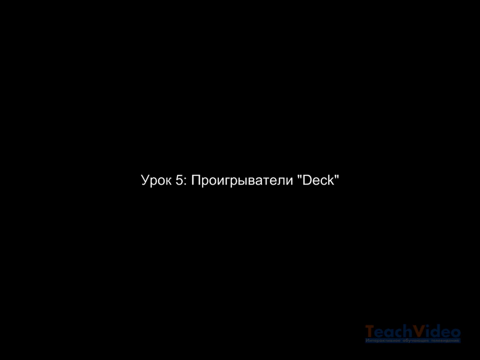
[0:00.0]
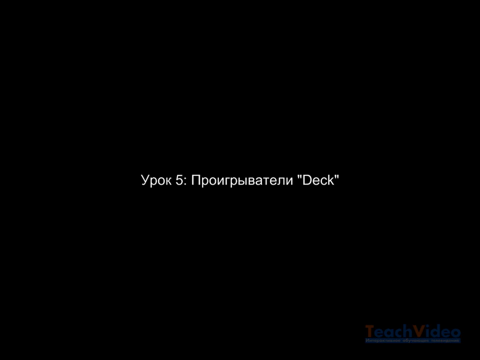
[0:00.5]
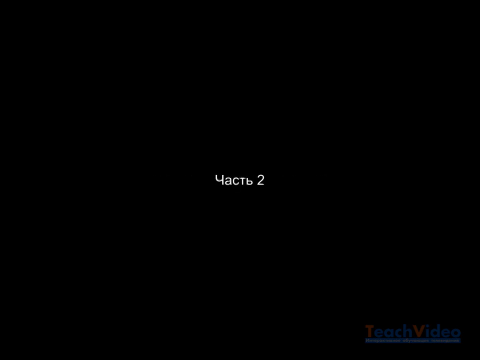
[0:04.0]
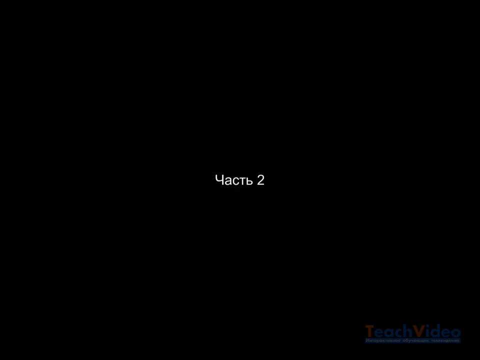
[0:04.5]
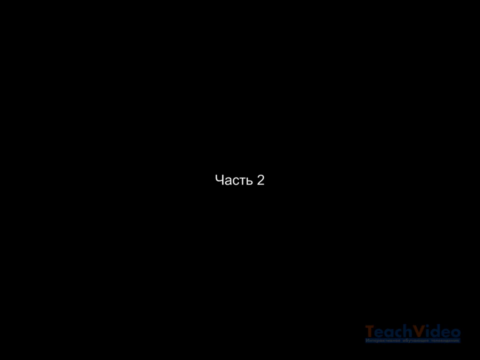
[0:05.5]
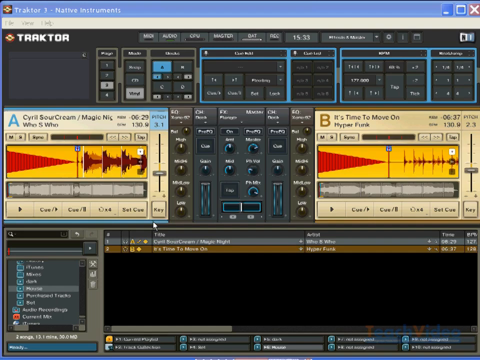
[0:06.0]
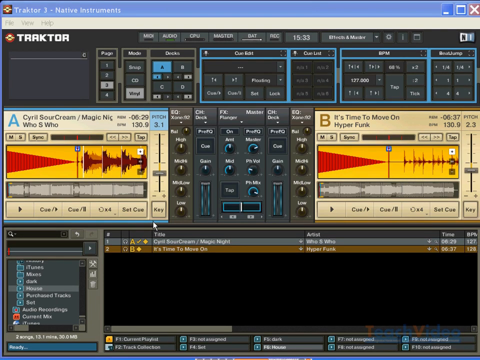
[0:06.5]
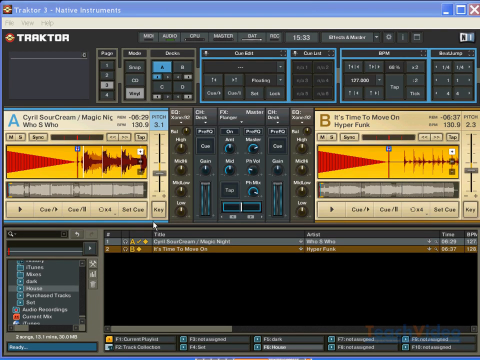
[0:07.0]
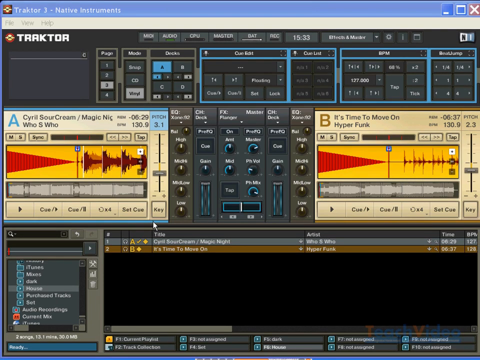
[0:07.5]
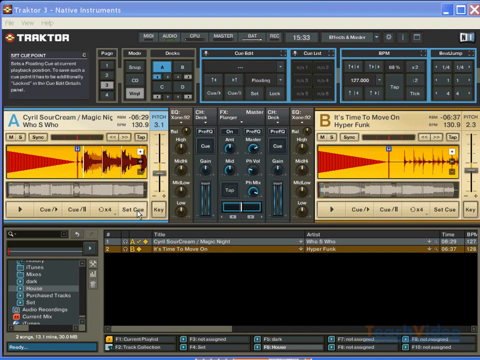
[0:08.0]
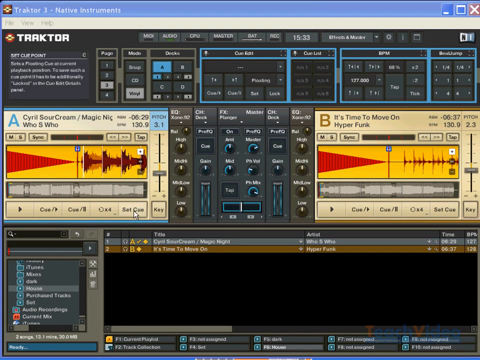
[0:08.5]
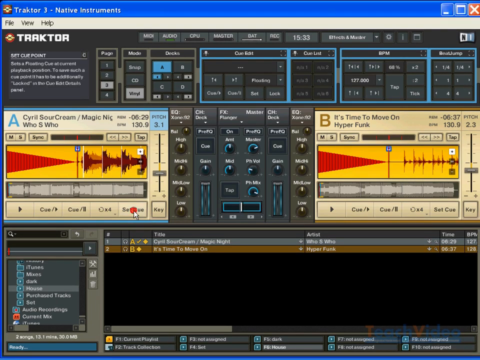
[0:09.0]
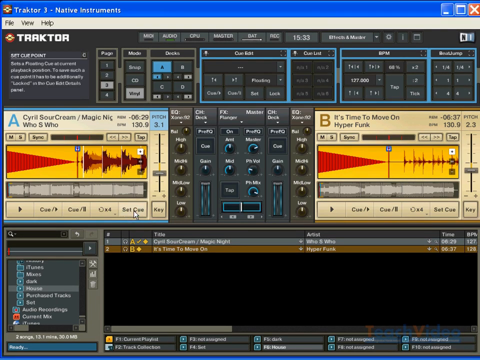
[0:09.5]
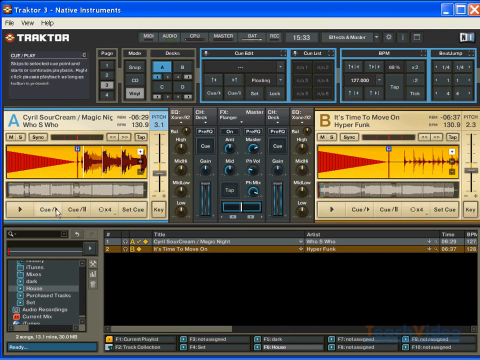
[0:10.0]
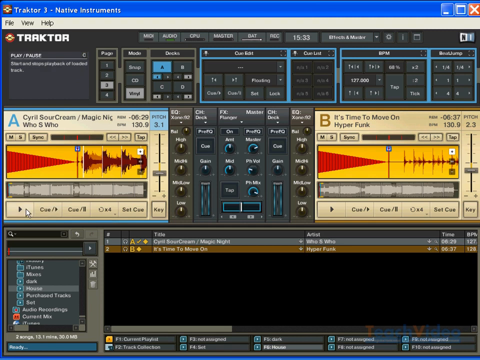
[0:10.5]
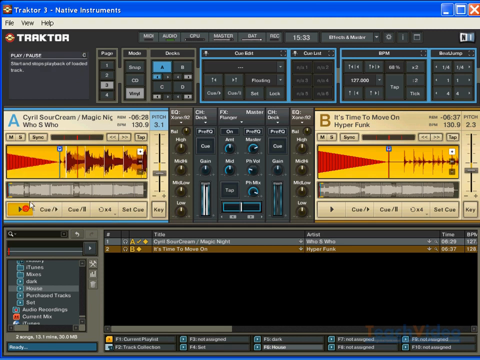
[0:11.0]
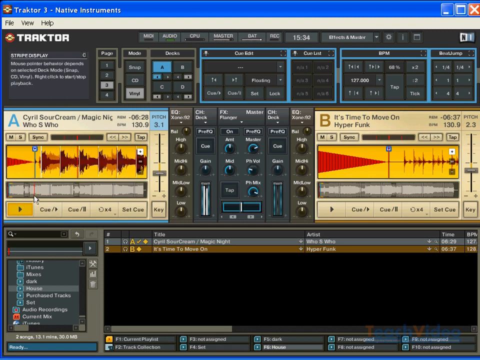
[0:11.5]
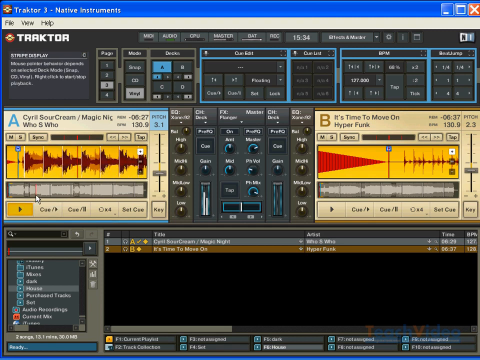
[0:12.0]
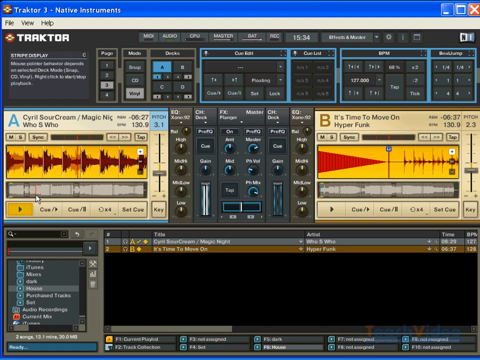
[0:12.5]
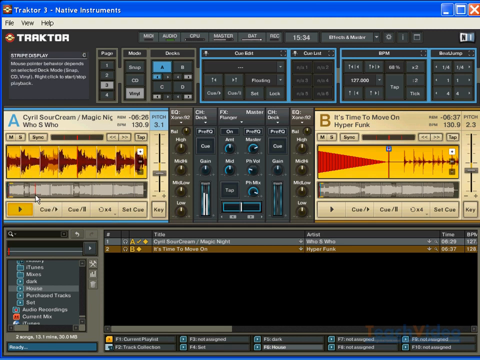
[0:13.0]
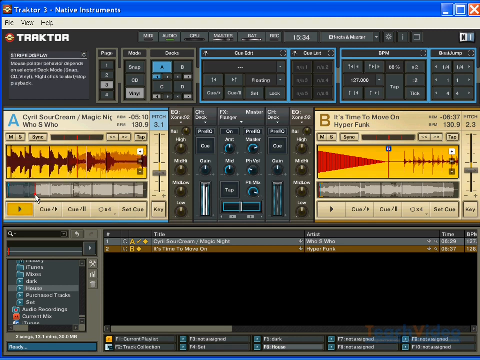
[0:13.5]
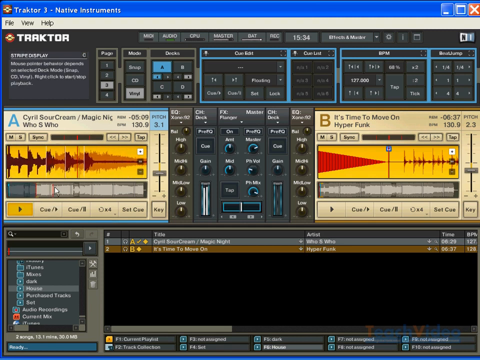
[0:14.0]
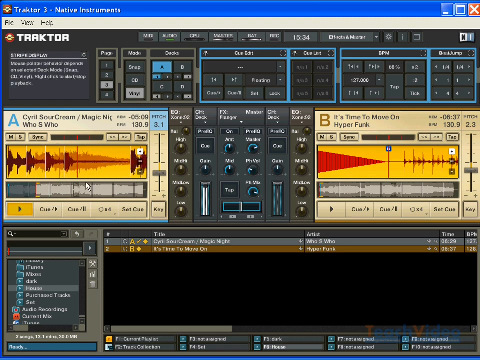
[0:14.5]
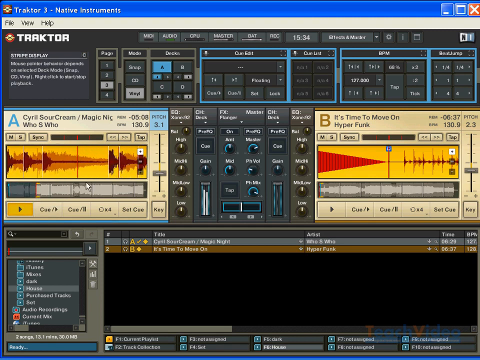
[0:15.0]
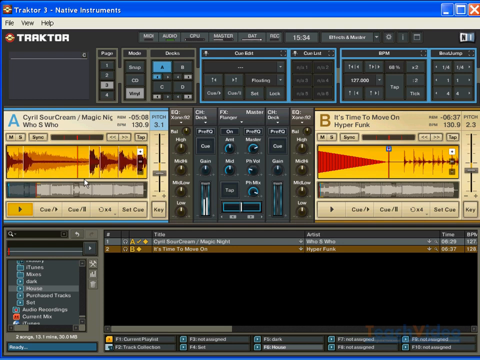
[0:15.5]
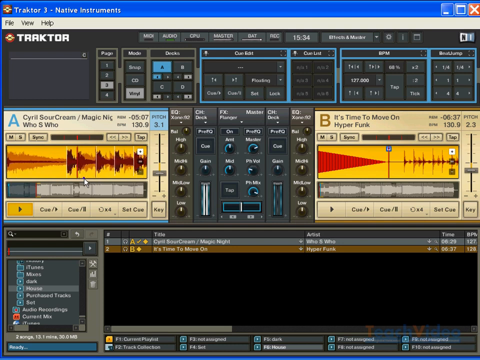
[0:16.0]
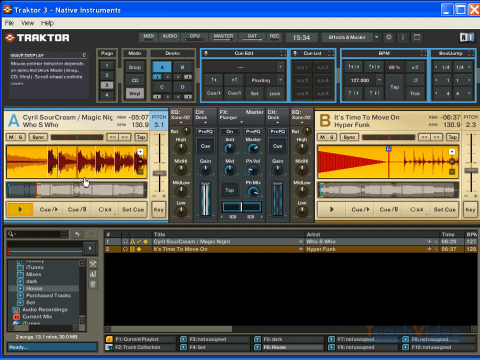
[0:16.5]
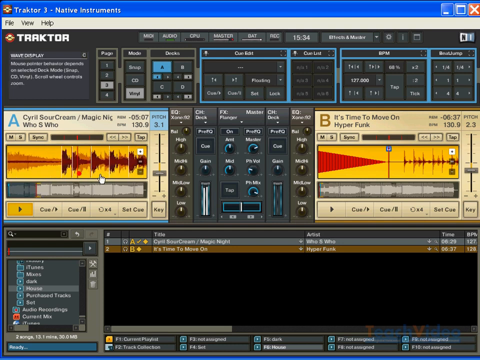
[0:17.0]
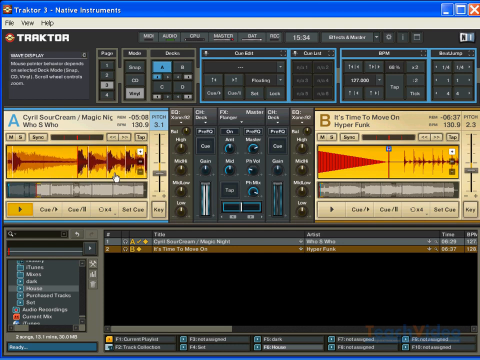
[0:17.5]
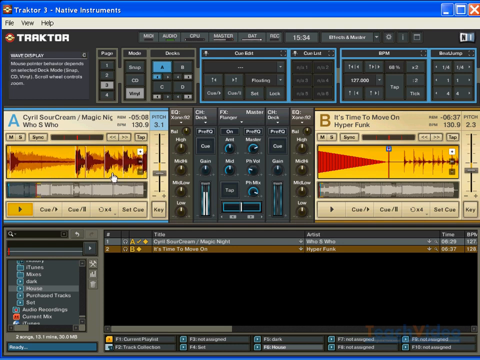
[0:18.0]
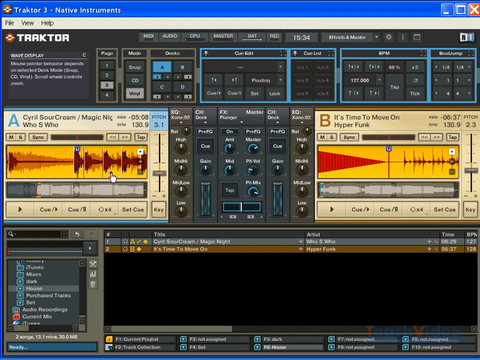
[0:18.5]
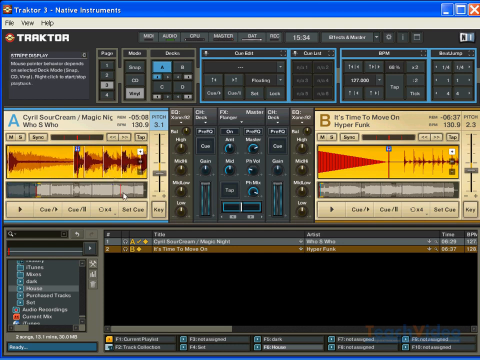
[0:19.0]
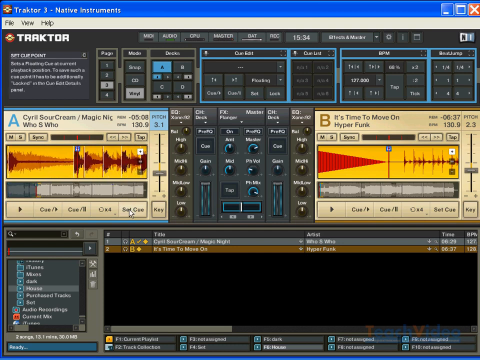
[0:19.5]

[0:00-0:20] An all-black screen shows white text in the center that appears to be in Russian; at the end of the text the word "deck" is in quotation marks. The text then changes to more Russian, this time with the number two at the end. Next comes a computer screen share of some sort of audio program. At the top is a Windows window whose blue top bar reads "TRAKTOR3-NATIVE INSTRUMENTS" in a white font, with minimize, maximize and exit buttons on the right and the Traktor logo before the text on the top left. The logo is hard to make out; it almost looks like a yellow championship belt with an X in the middle, surrounded by a red outline, though this is uncertain. Inside the program, a gray menu at the top reads "File", "View" and "Help" on the top left. Below that is the Traktor logo again, with "Traktor" in a big white font beside it. The program has hundreds of buttons and little knobs for controlling the audio. The screen is mostly black with white text and black knobs, with occasional blues here and there. The layout divides into three rows. The top row has a bunch of buttons. The second row has two square boxes on the left and right of the screen and a black box in the middle full of knobs. The left and right boxes are a faded yellowish color, and each has a very bright yellow rectangle in the middle, long and wide, containing red sound waves. Below the yellow rectangle is a rectangle of grayed-out sound waves, and below that a bunch of buttons. The third row has, on the very left, a list of things to click through that takes up maybe 20% of the screen, and the rest is a list of what looks to be tracks; there are only two, with the title, track, artist, time and beats per minute shown for each. The mouse cursor moves over the left box in the second row and clicks a button roughly in the bottom right of the box that says "Set Cue", then clicks a play button on the bottom left of the box. The red sound waves in the yellow rectangle start moving from right to left. The cursor clicks on part of the gray rectangle beneath the yellow rectangle, closer to the left side, which seems to change the red sound waves above. It then grabs the yellow rectangle with the red sound waves and drags it a bit to the right, lets go, and moves back down to click a button.